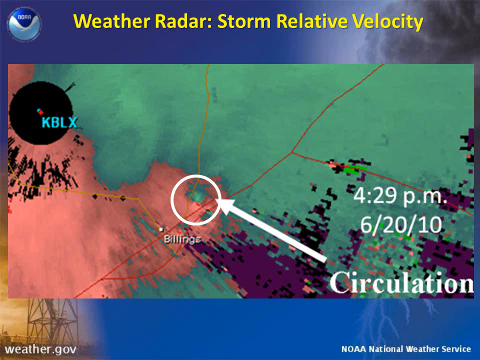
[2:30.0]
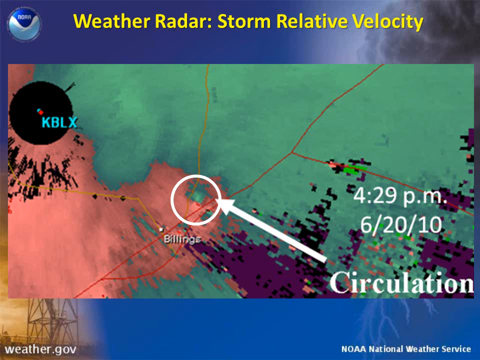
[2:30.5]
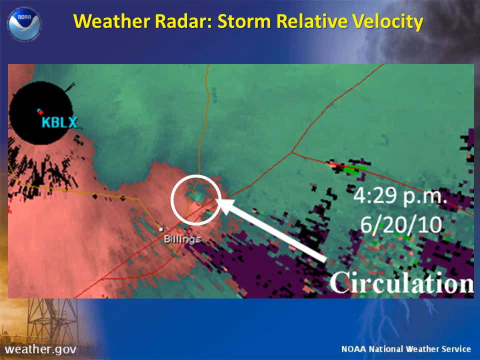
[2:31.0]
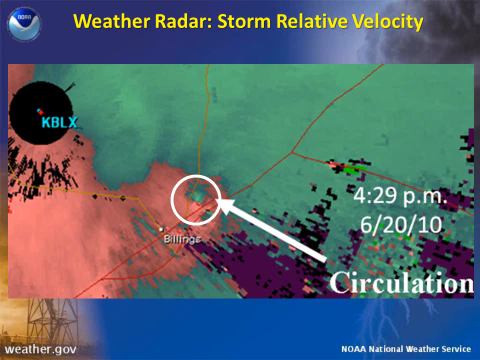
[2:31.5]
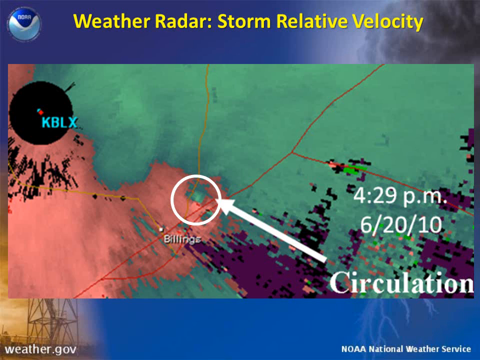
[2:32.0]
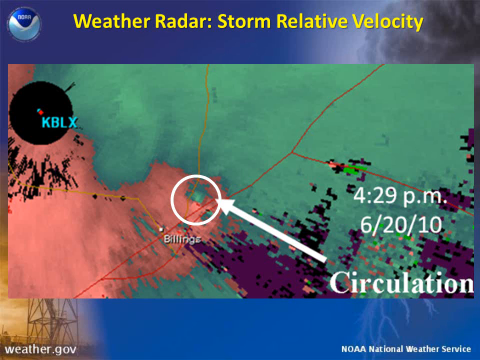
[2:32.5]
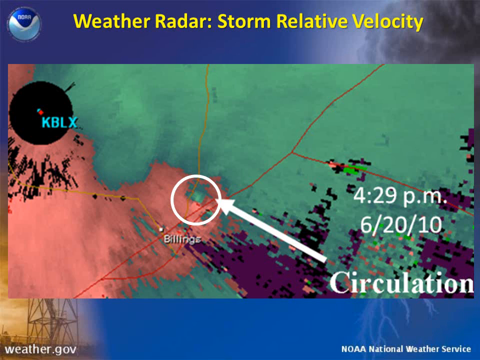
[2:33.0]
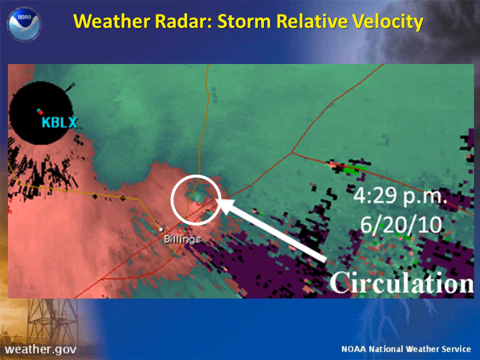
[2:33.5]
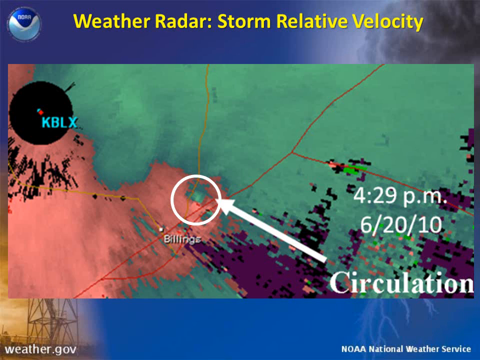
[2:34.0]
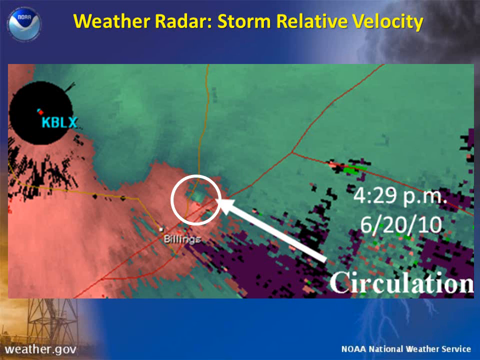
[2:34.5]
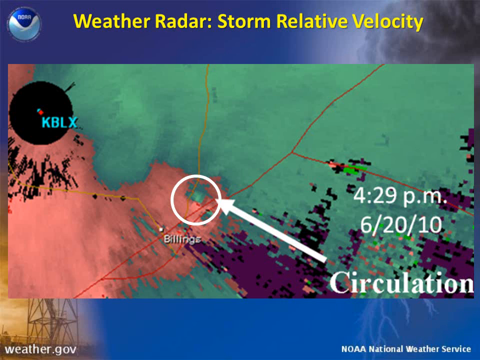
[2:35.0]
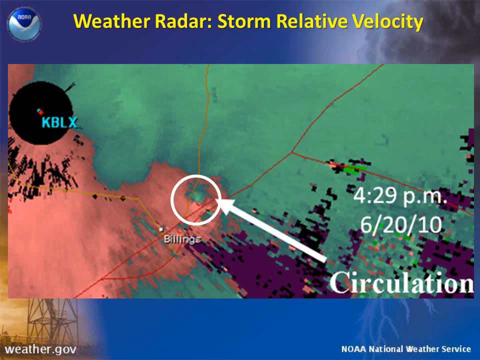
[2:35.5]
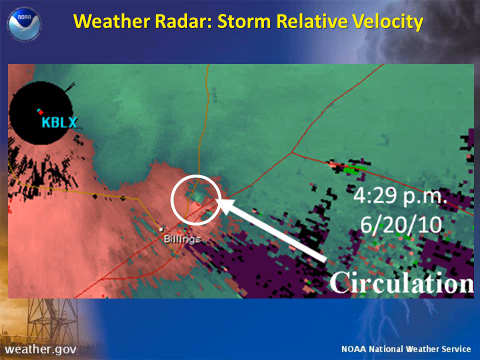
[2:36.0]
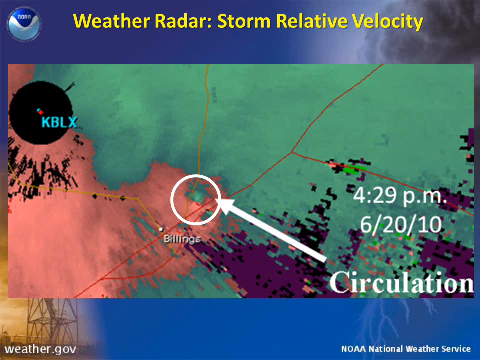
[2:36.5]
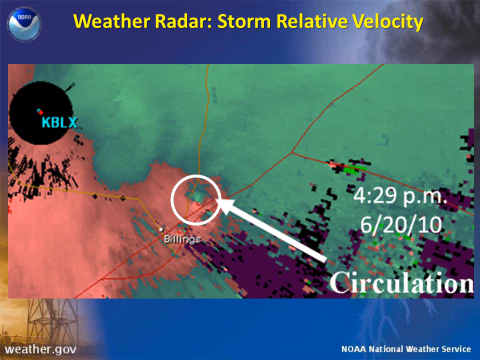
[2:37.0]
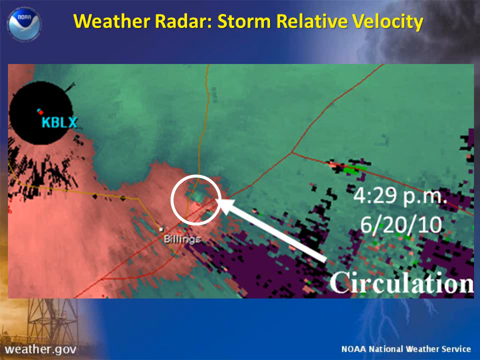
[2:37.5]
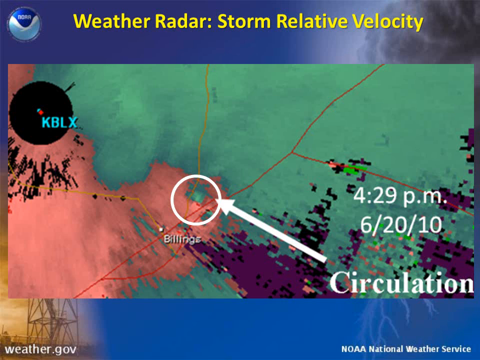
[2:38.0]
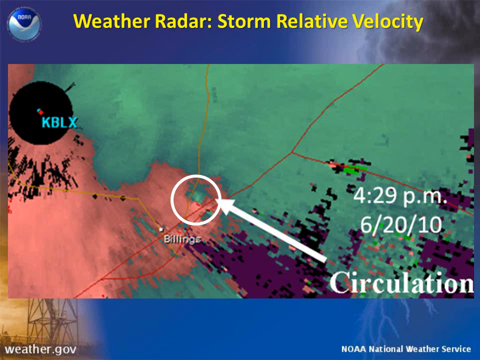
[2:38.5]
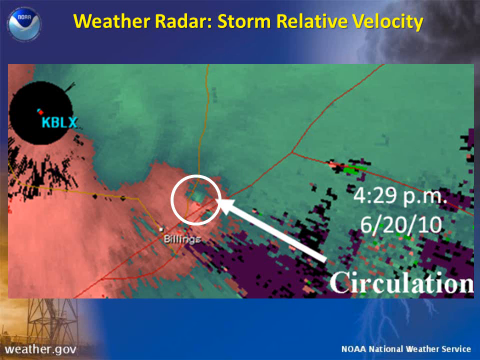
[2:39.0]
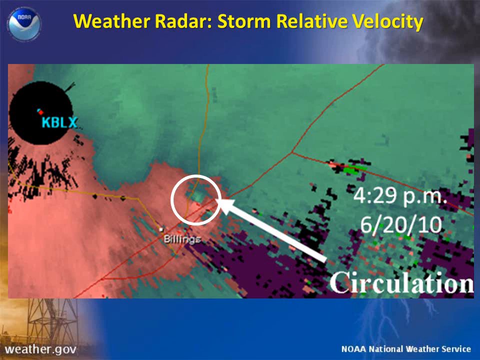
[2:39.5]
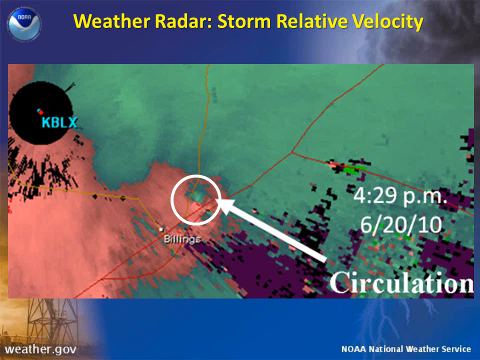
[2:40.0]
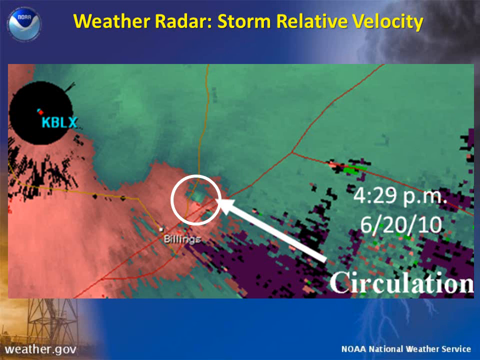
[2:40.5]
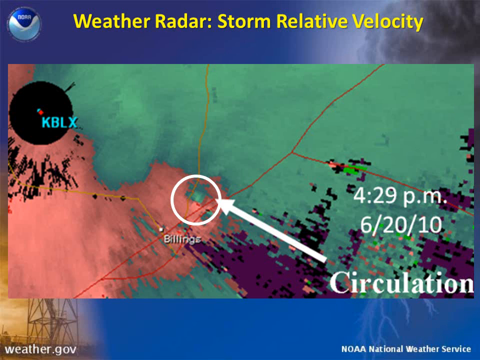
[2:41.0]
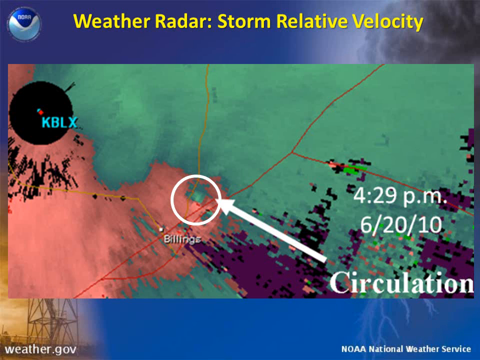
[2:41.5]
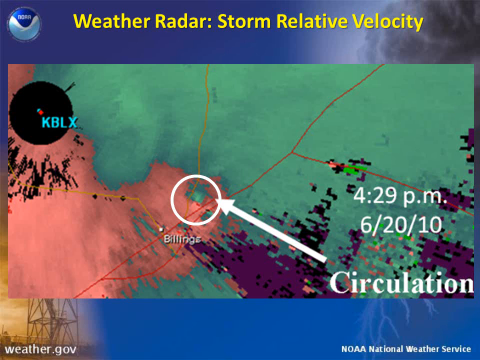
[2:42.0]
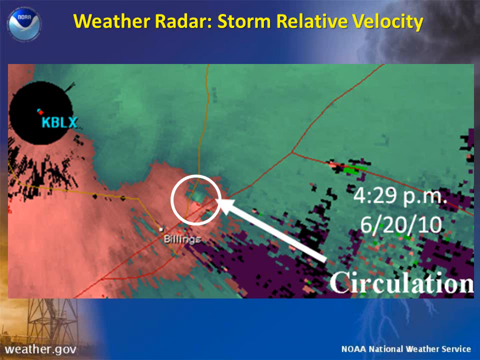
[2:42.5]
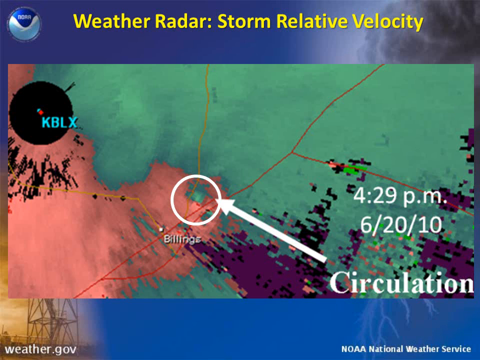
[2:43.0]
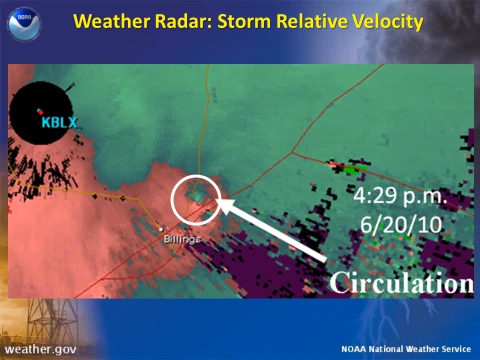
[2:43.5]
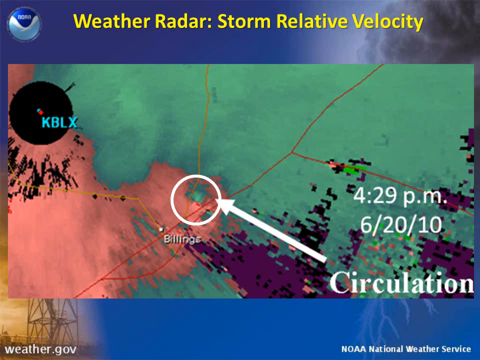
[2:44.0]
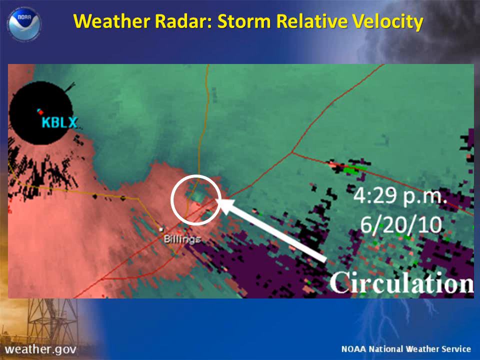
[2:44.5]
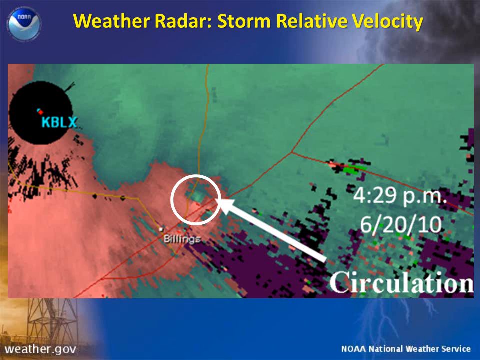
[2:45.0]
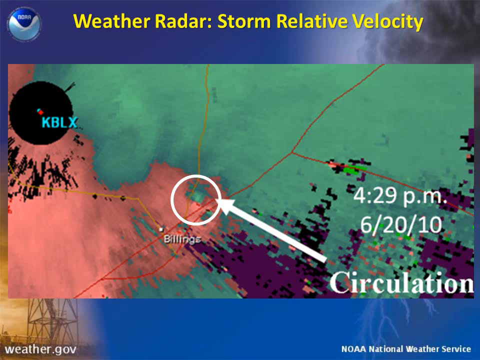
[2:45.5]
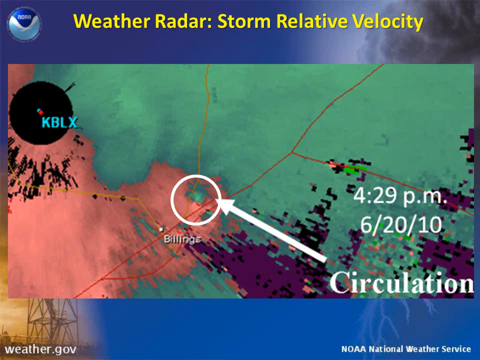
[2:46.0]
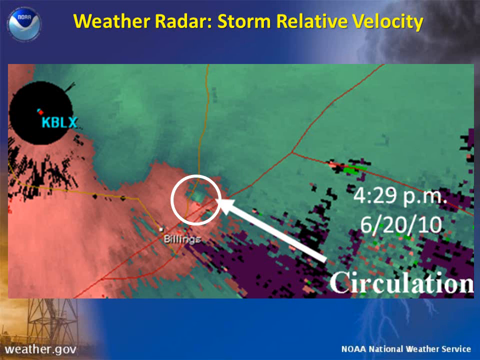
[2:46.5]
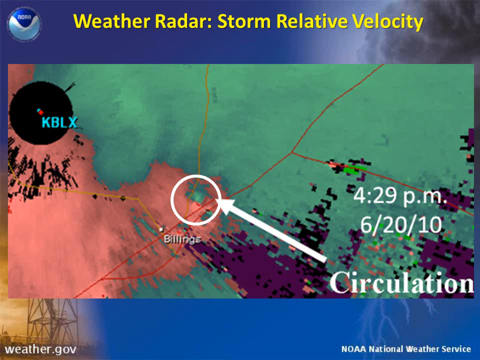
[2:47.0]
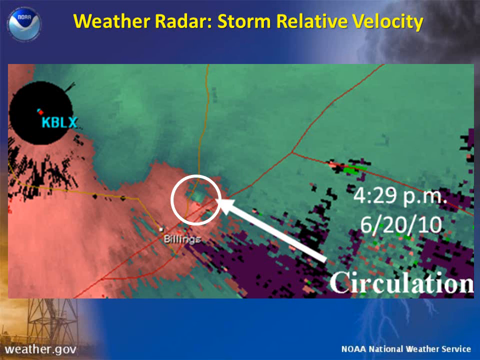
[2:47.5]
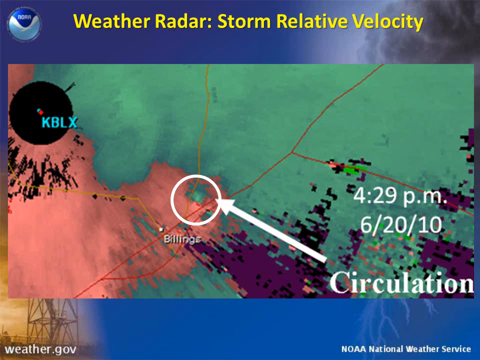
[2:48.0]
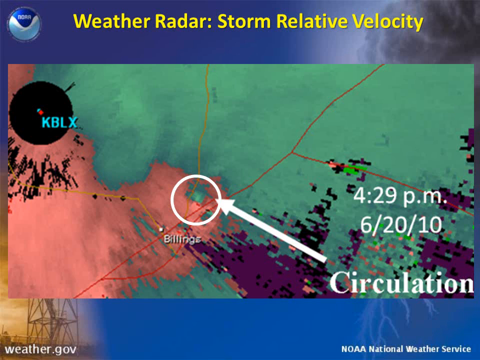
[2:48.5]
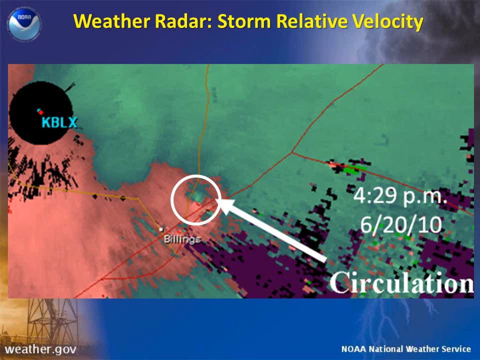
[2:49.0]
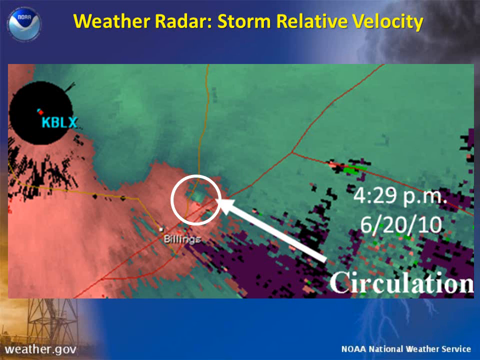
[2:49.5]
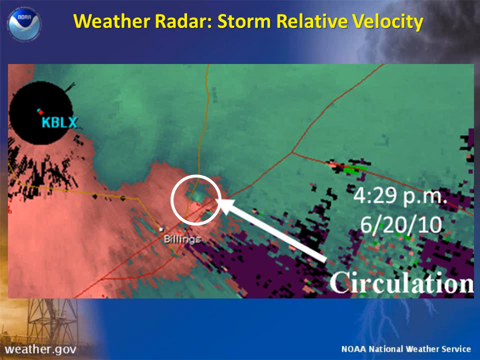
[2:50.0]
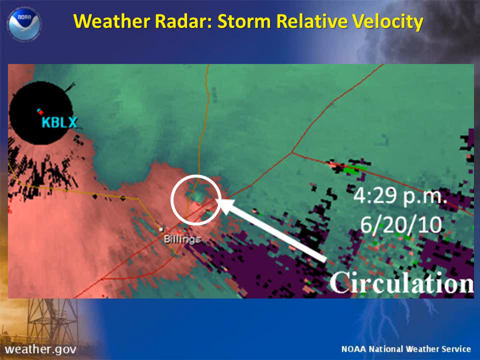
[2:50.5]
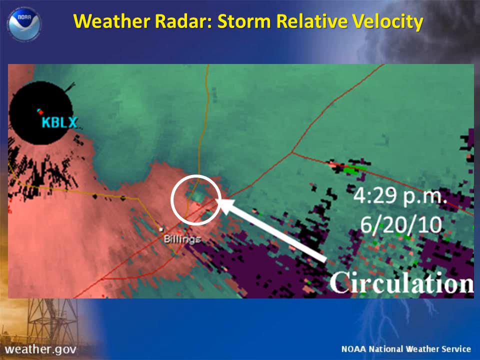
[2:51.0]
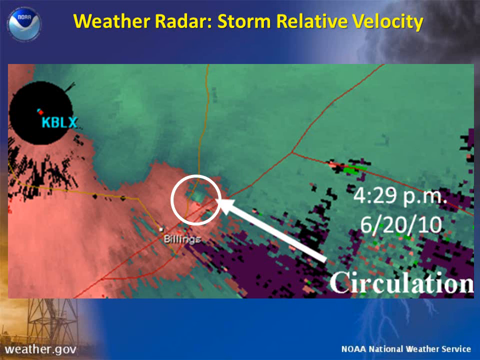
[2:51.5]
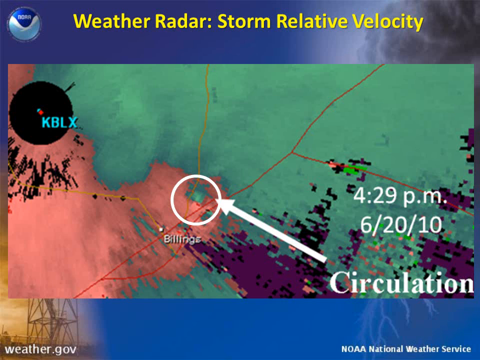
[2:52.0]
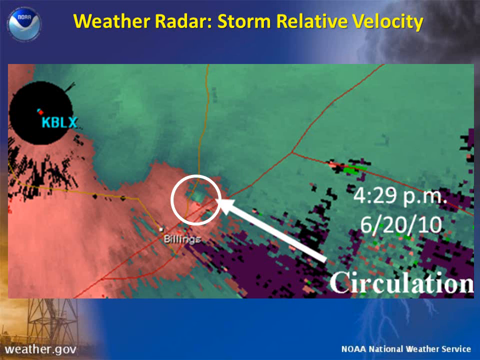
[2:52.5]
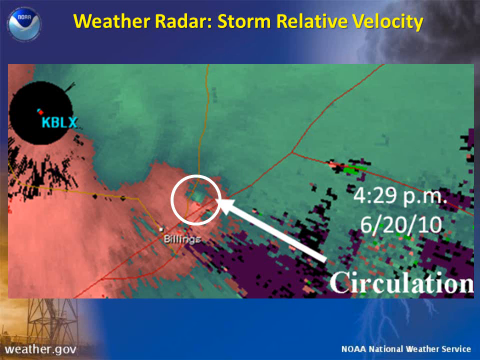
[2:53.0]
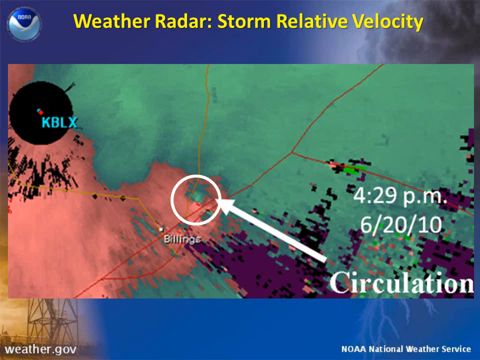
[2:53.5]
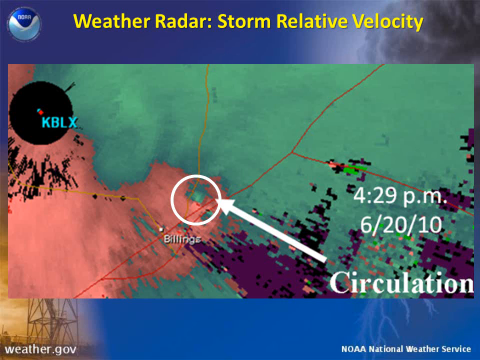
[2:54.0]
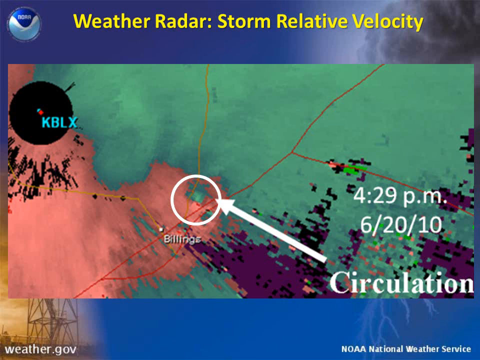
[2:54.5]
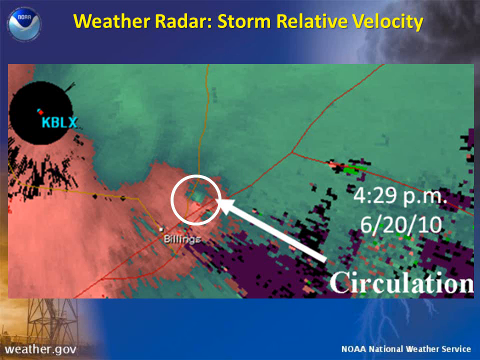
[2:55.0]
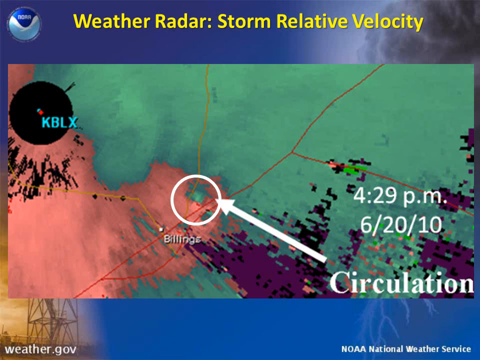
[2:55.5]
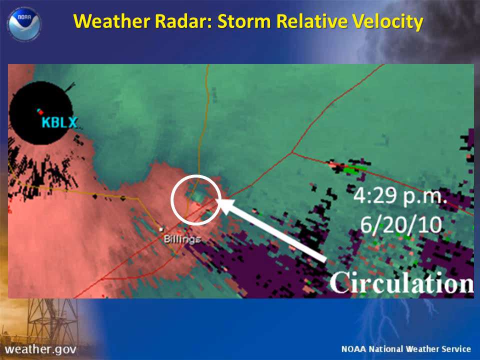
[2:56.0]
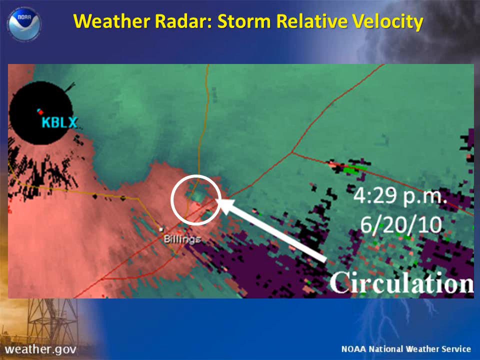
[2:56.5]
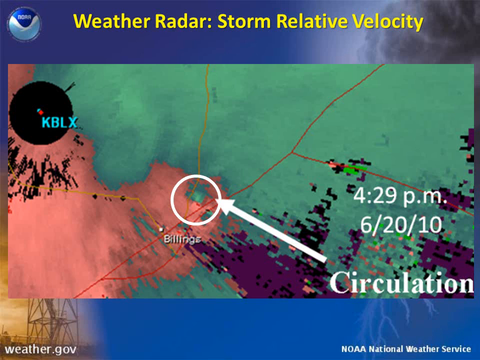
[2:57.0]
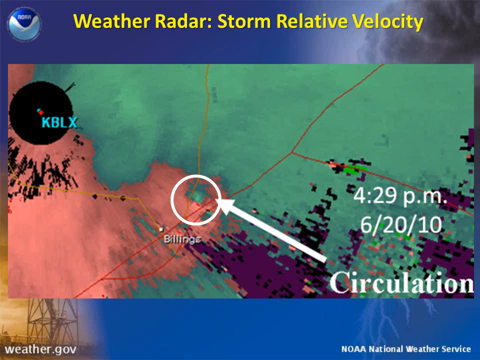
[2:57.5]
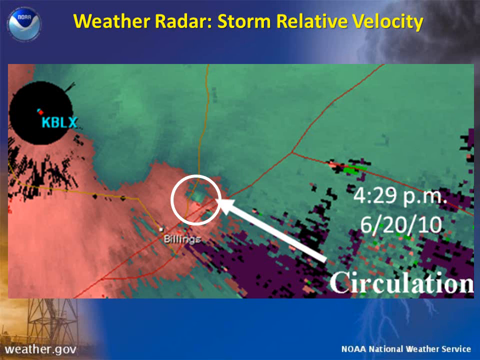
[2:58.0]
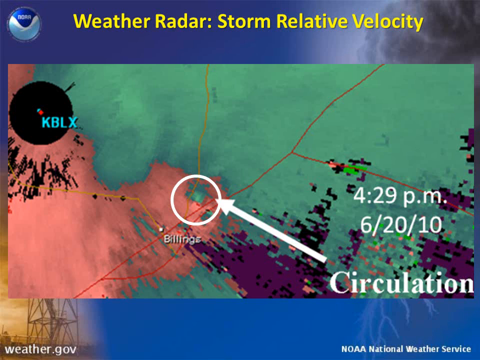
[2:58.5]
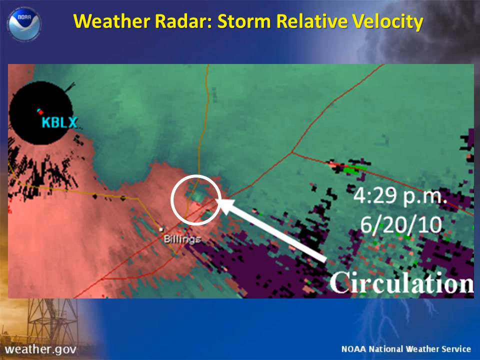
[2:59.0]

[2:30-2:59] A PowerPoint-style slide looks like it could be for a weather class. The background has a storm cloud in the top right corner and a dark gradient blue as the background color. The title, "weather radar: storm relative velocity," is in bold yellow text. To the left is a circular logo of three colors: dark blue in the top center, a small white wave-style line with a slight U shape beneath it, and light blue beneath that. A square weather radar image has a seafoam green patch as its primary color, on the right side and towards the middle, and at the top it goes almost all the way to the far left side but not quite. Purple patches are overlaid on the green, and a pinkish patch on the left side kind of reaches in toward the green but takes up only maybe 15 or 20 percent of the image. A hollow white circle is over a certain point on the radar with a white arrow pointing to it. The date and time are shown in white text overlaid on the radar.